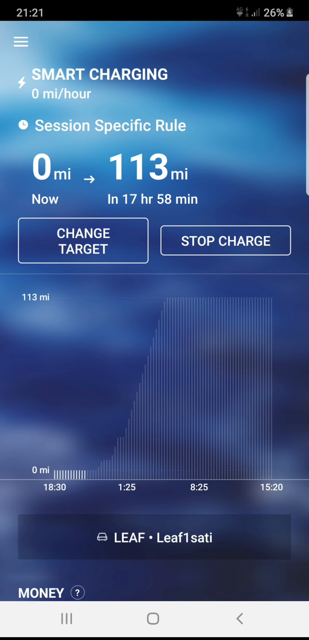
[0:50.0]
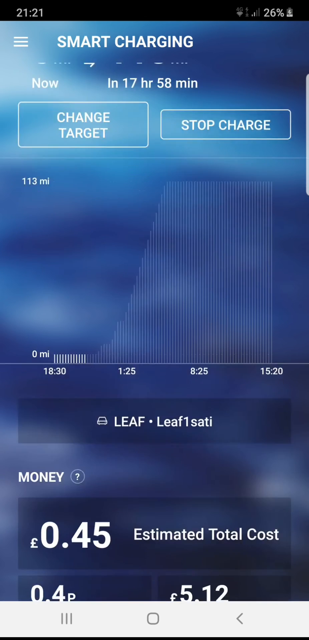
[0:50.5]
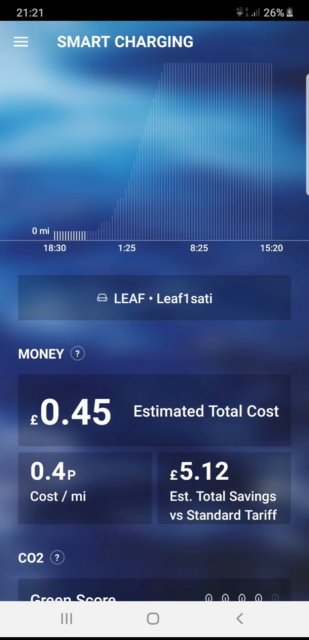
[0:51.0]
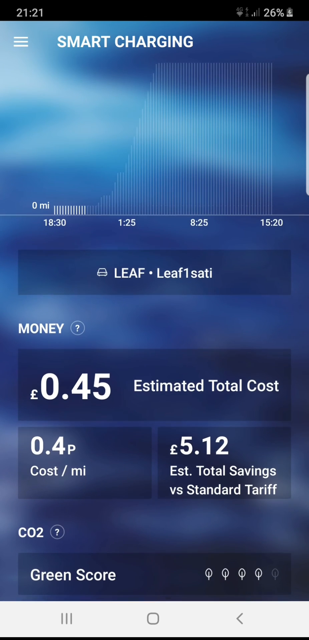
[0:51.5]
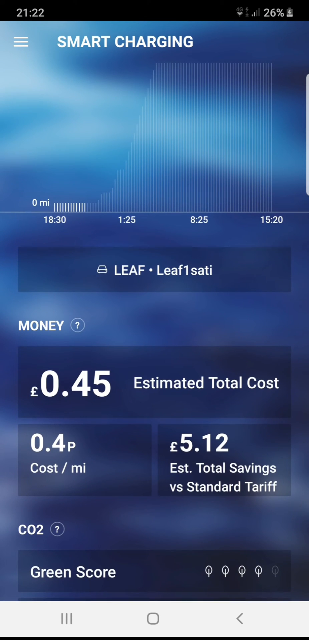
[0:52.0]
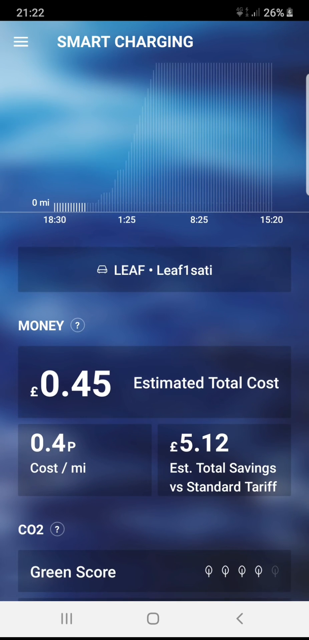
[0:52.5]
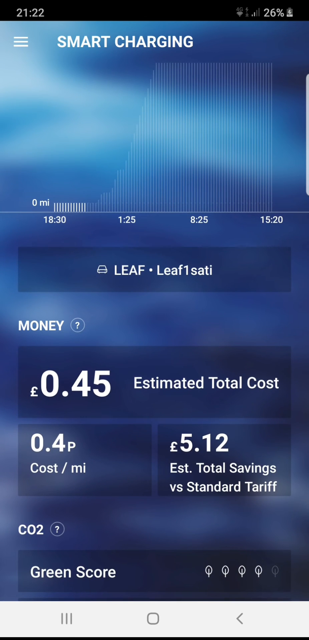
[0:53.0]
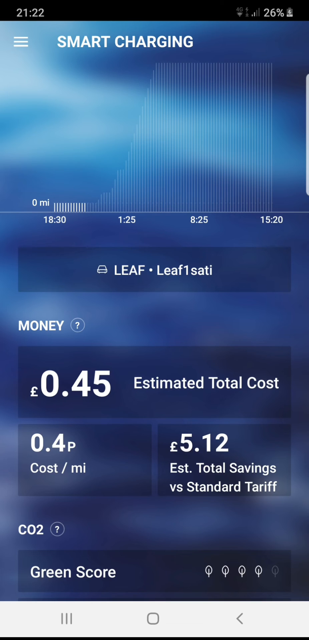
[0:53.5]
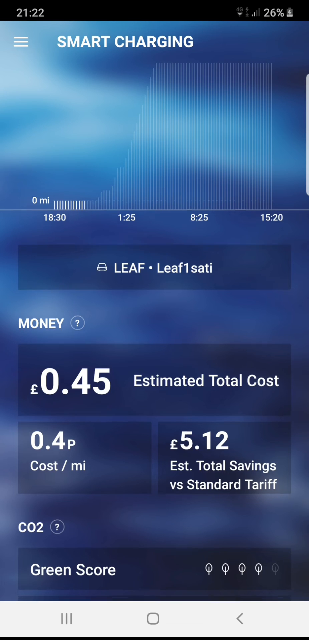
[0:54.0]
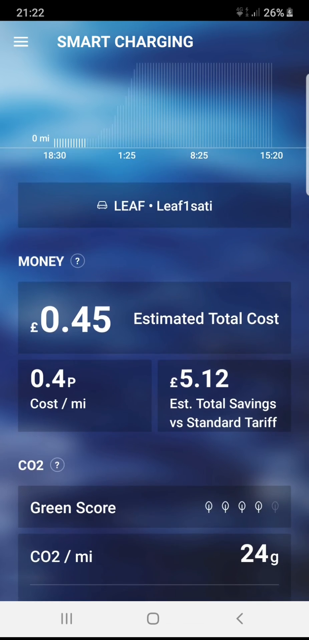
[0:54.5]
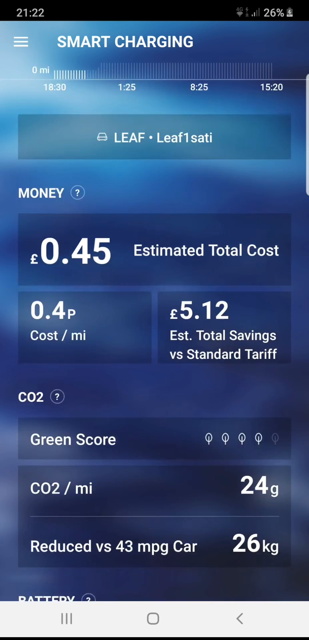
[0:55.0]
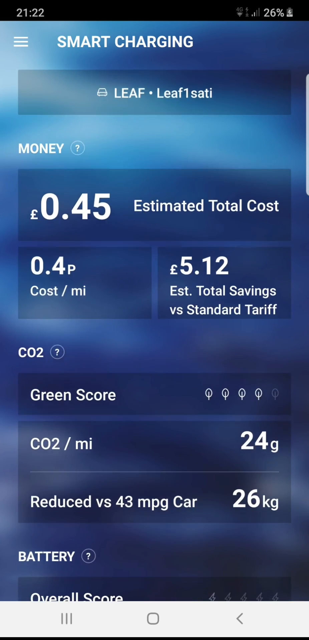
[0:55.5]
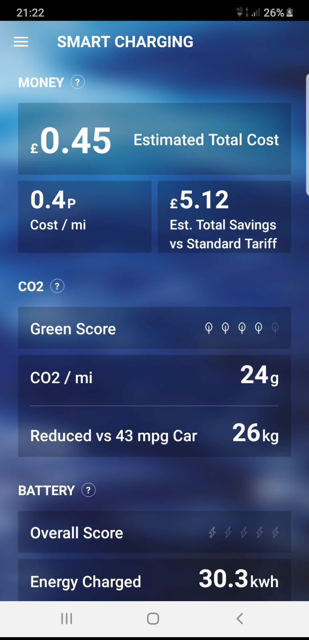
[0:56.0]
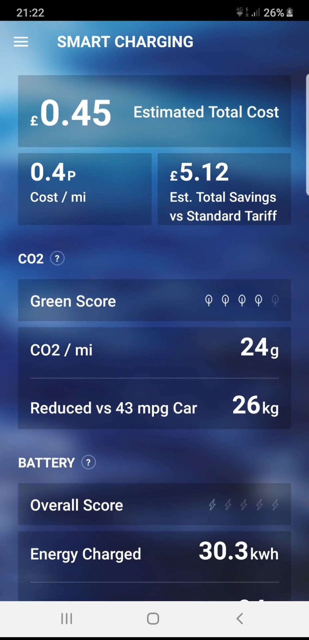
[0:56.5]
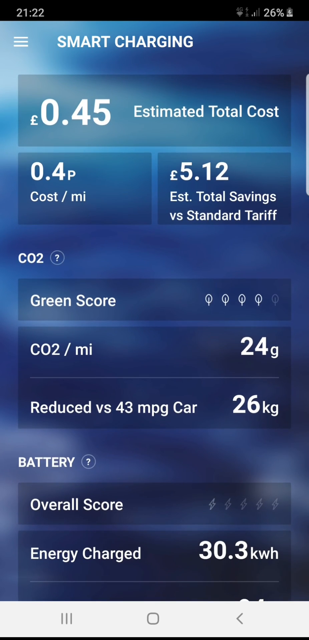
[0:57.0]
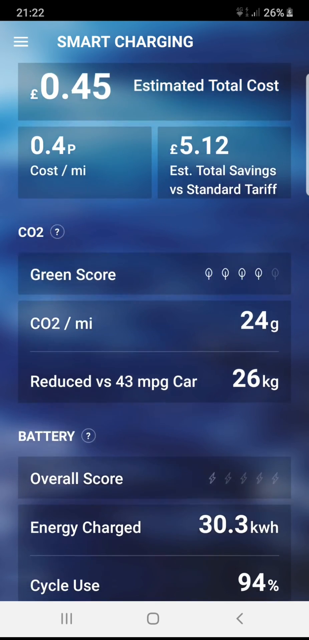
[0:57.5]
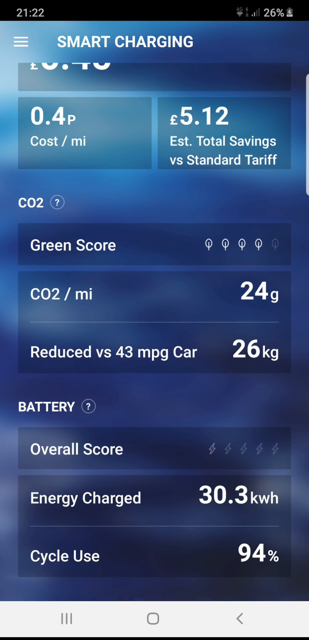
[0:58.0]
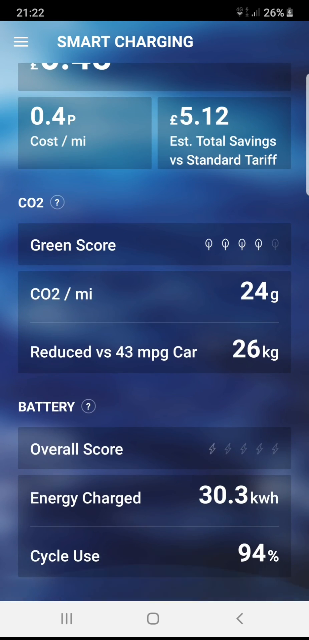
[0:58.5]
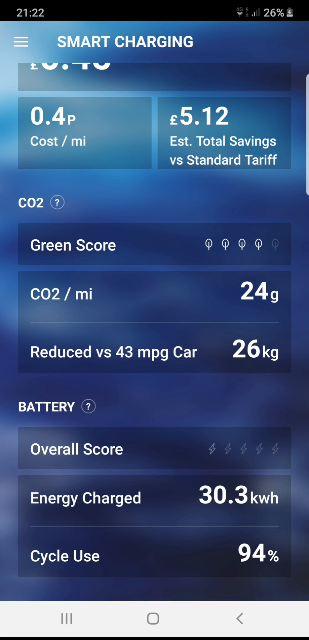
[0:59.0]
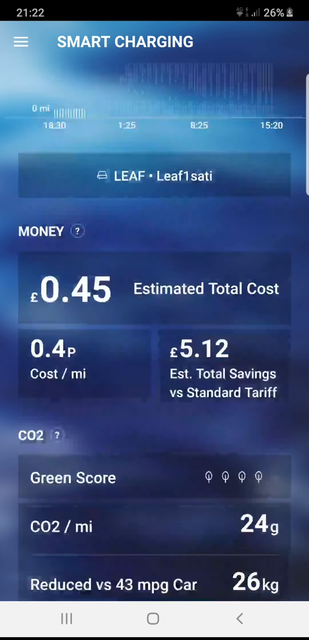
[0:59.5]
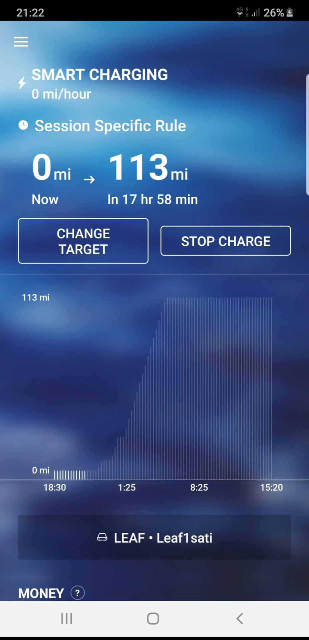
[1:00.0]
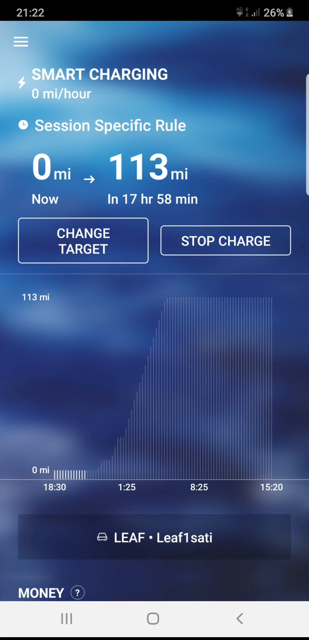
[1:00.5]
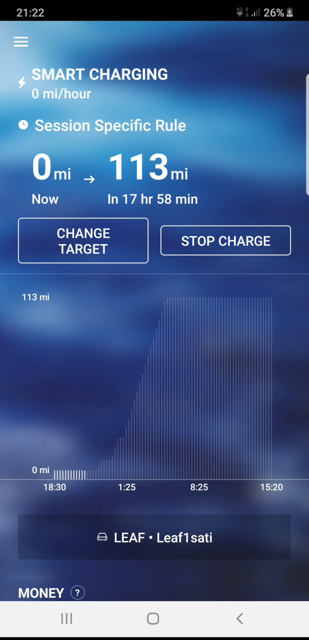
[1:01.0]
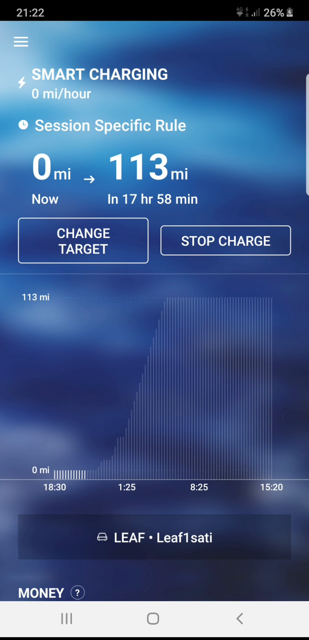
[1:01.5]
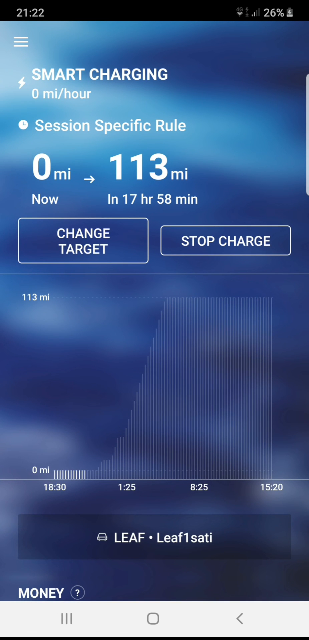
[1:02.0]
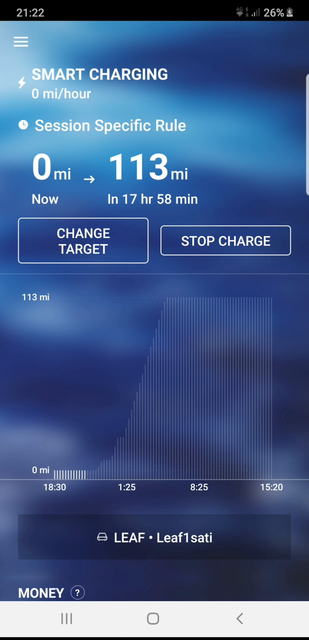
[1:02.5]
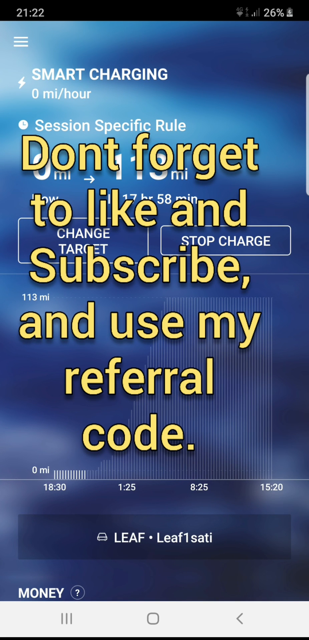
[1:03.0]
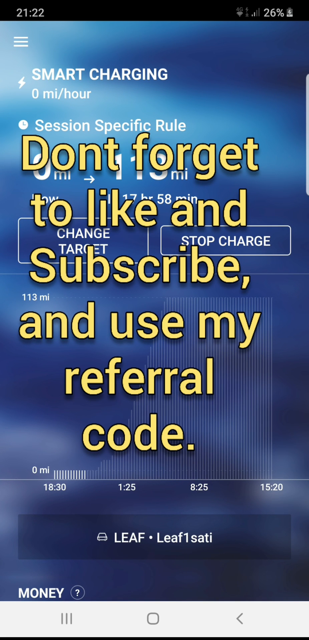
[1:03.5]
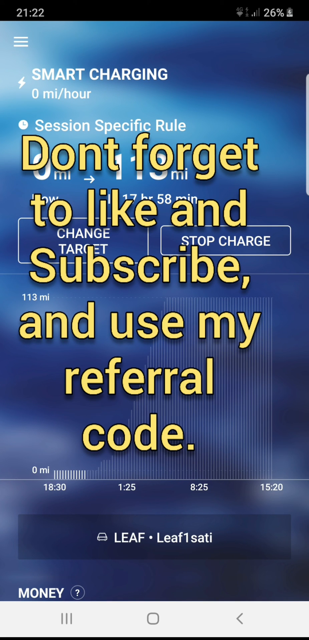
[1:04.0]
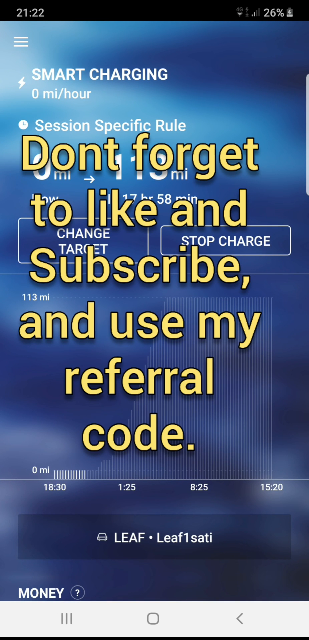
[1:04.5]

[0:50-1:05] The main screen returns. It is scrolled down to the status for CO2 and the battery, then scrolled all the way back up. Text appears in yellow block letters with a white outline reading "don't forget to like or subscribe, thank you. and use my referral code". The text then vanishes and the video ends. No channel name is listed, and there is no link or icon to click to the channel or to subscribe.